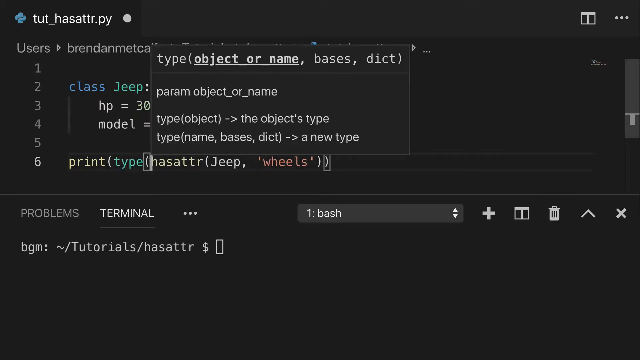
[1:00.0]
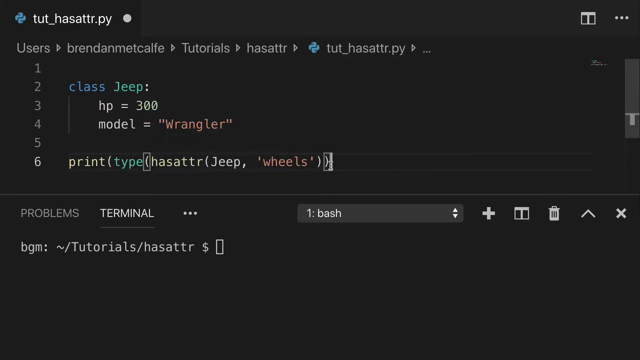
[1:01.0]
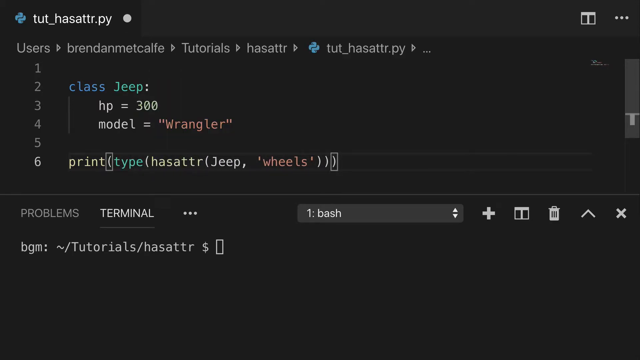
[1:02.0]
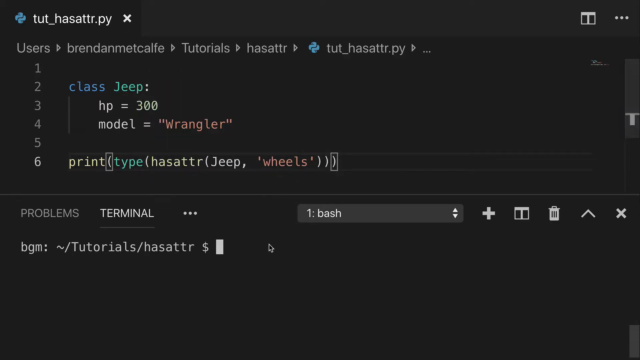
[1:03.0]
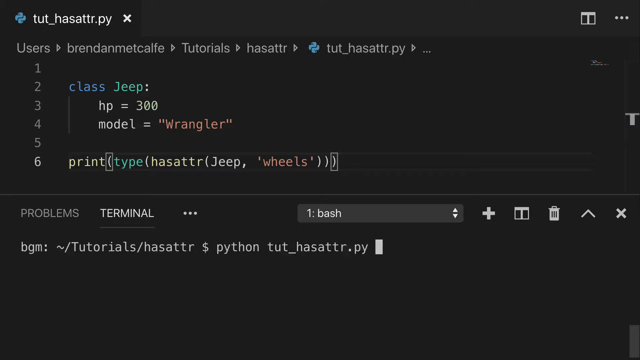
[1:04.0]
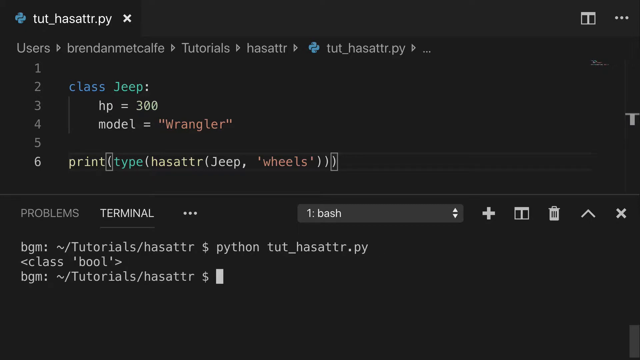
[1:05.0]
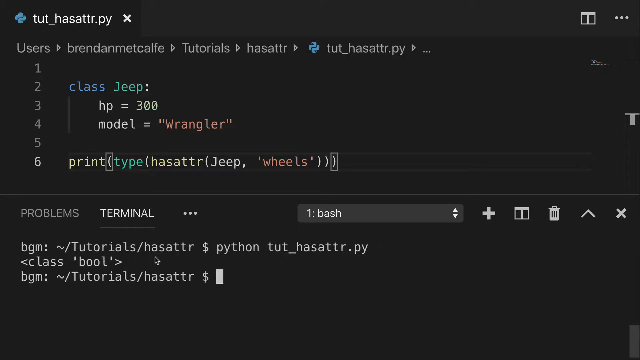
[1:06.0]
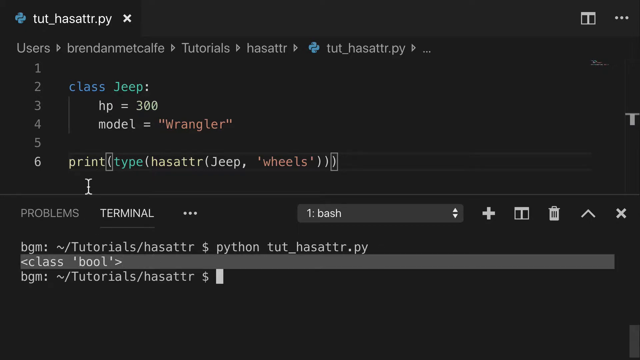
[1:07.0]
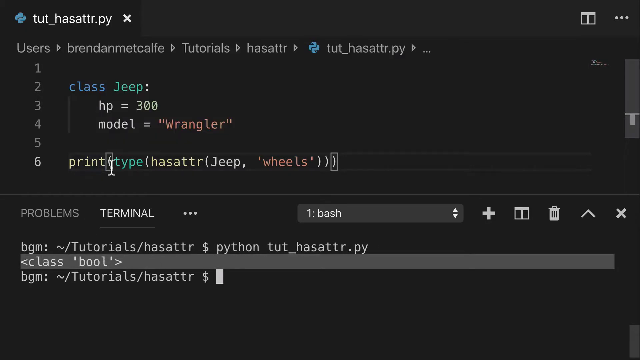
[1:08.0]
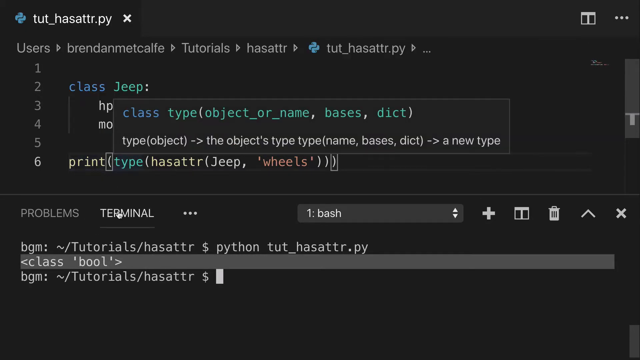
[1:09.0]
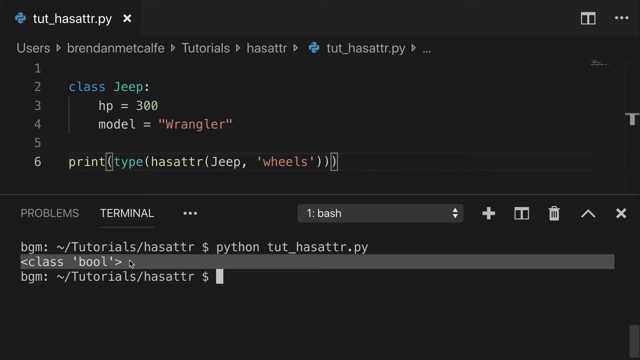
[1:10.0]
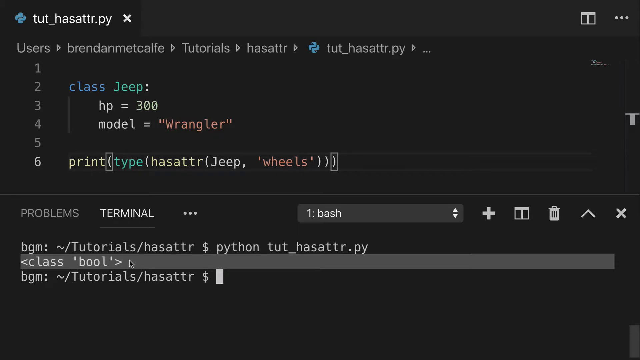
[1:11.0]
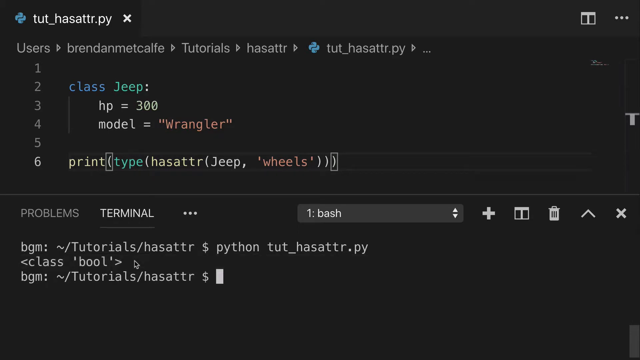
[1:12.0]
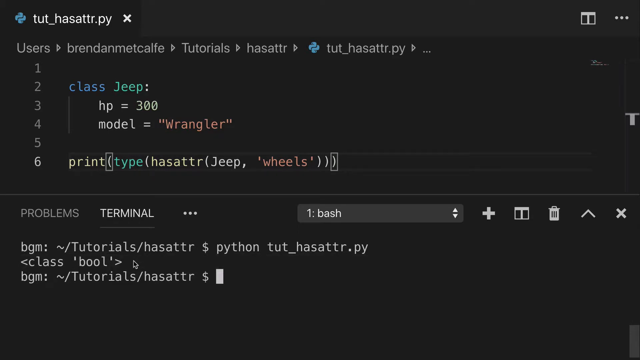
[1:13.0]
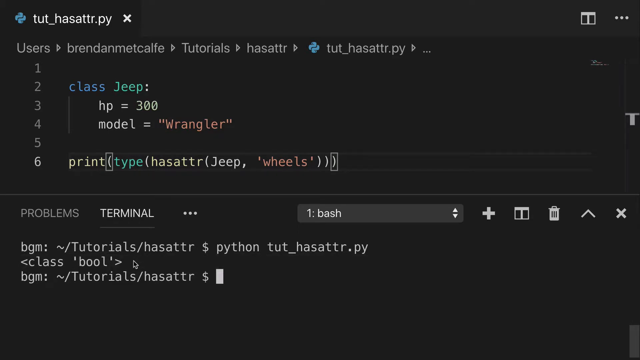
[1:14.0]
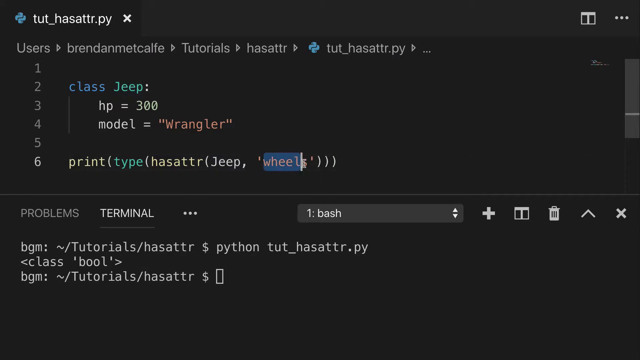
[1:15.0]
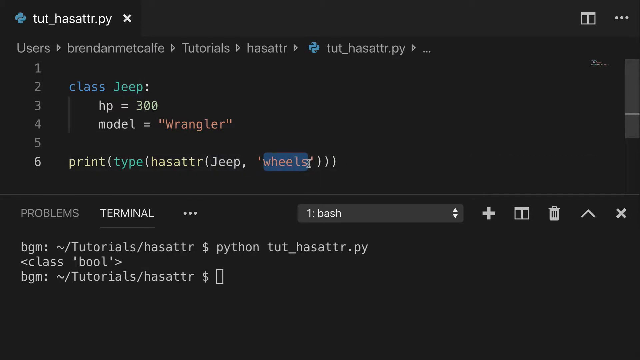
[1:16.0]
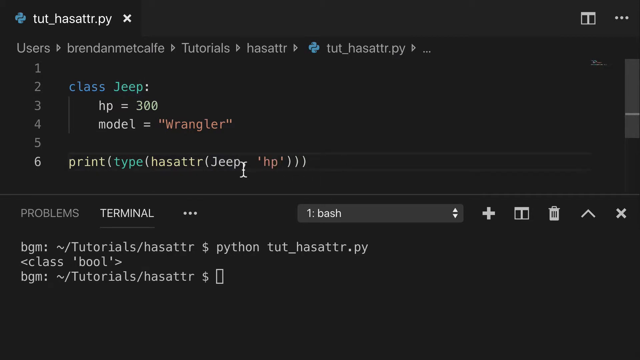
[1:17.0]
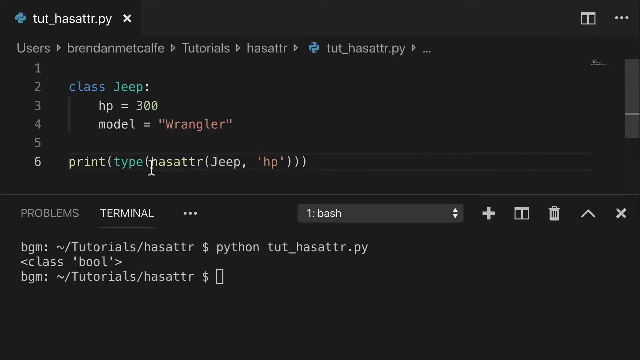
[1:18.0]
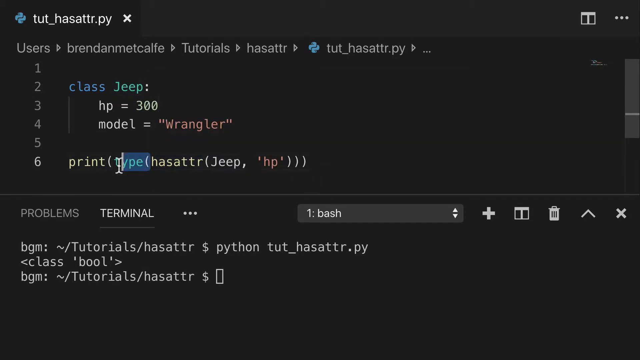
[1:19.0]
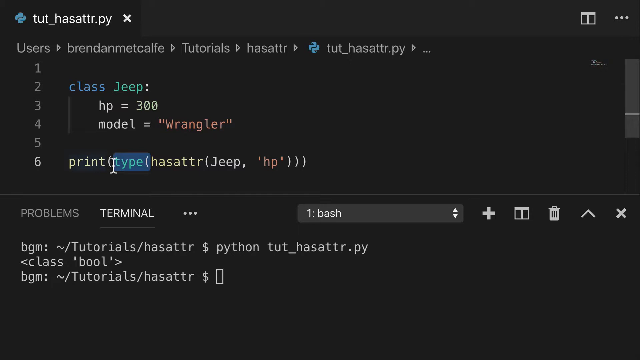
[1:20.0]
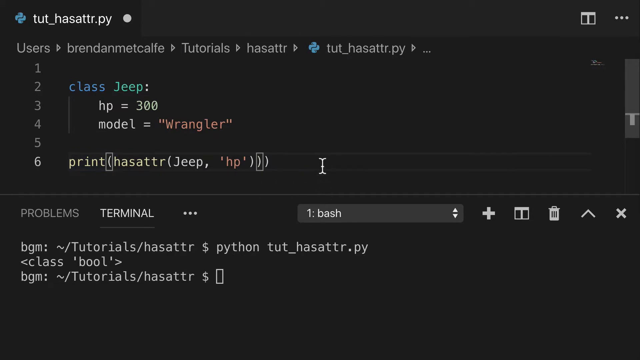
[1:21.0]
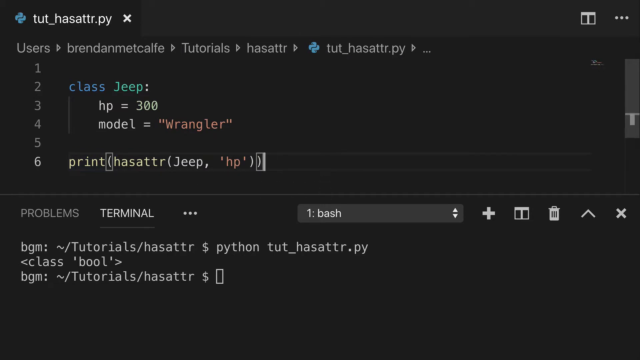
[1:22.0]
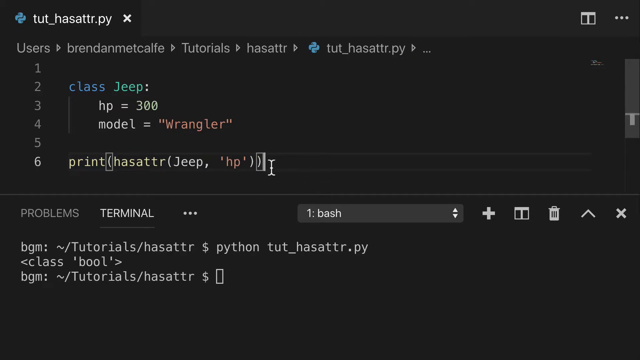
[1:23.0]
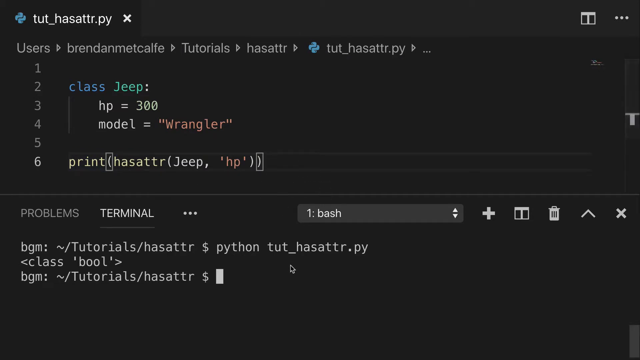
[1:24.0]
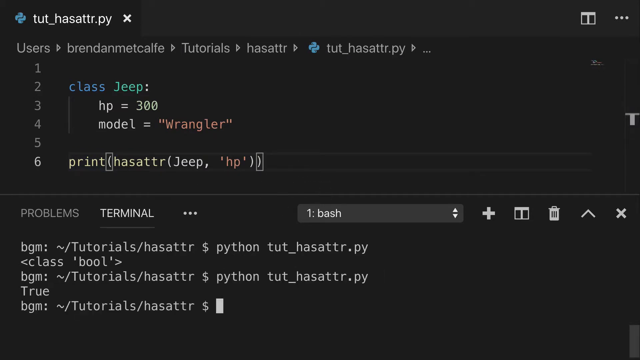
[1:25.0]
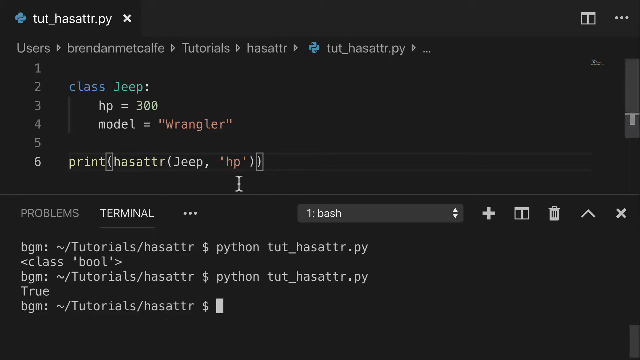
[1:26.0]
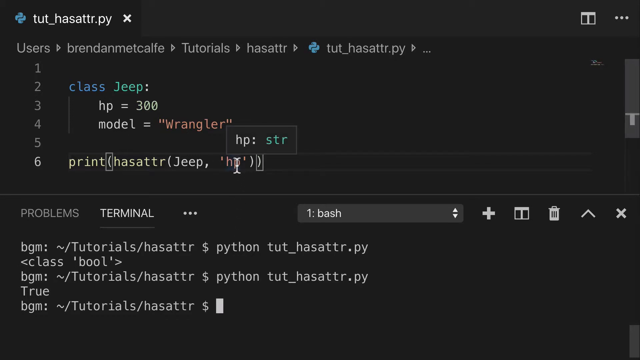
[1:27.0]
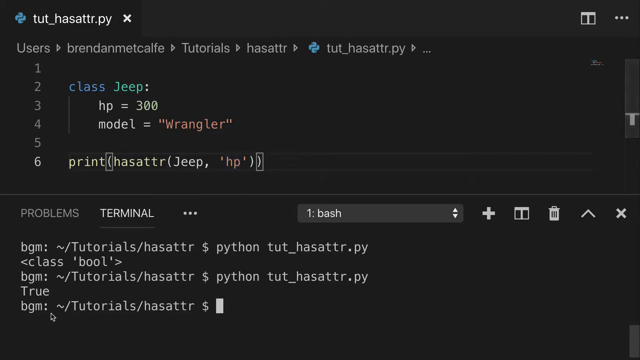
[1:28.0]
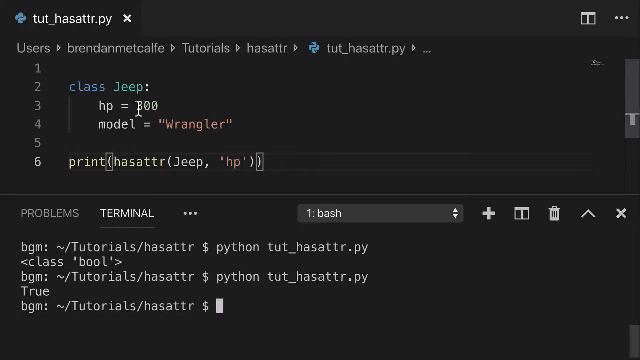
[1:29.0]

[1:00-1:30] A Python editor shows code in the file tut_hasattr.py. It has six lines, with the first and fifth lines empty, so the main code has four lines. The sixth line is typed as "print(type(hashattr(jeep, 'wheels'))", and a dialog box above it shows details about the type function. The cursor is placed at the end of this line and ")" is entered. The mouse moves to the terminal, the file name is typed, and the output is "<class 'bool'>". This output is selected with the mouse, the mouse moves upward and hovers on the sixth line of code, then returns to the terminal, and the output is deselected. Next, "wheel" on the sixth line is selected and replaced with "hp", "type" on that line is deleted, and the final ")" is deleted as well. The file name is typed in the terminal again and the code is run; the output is now "true". The mouse hovers over "hp" on the sixth line, which opens a dialog box at the top stating "hp:str". Then "300" on the third line of the code is selected.